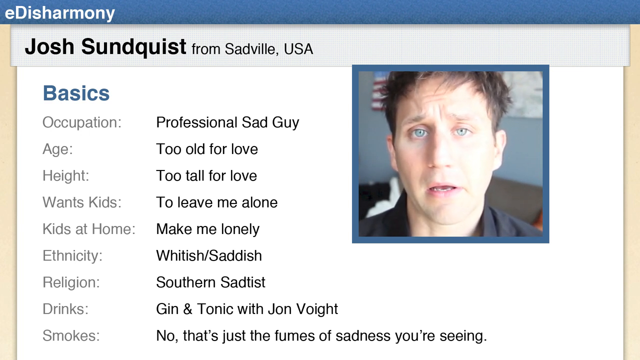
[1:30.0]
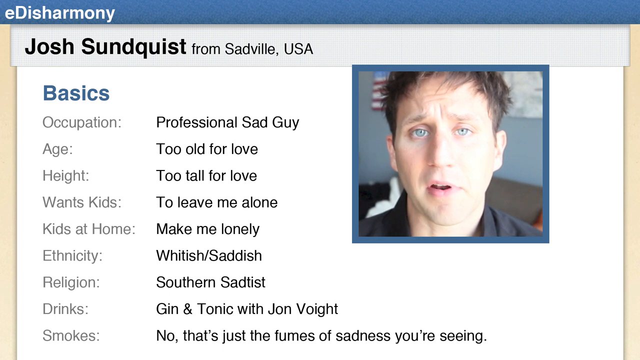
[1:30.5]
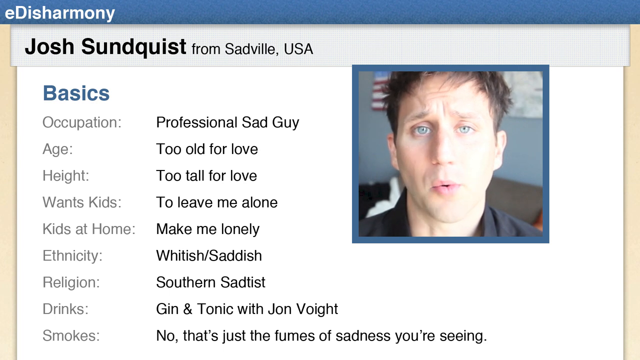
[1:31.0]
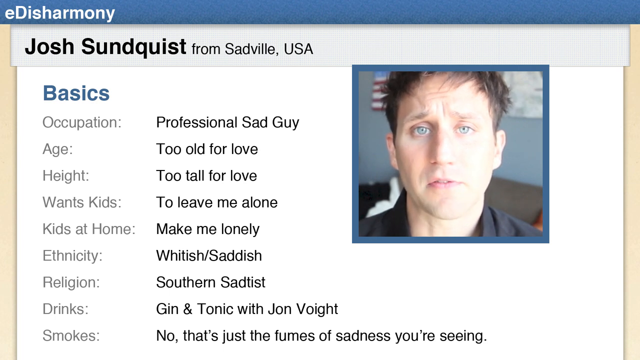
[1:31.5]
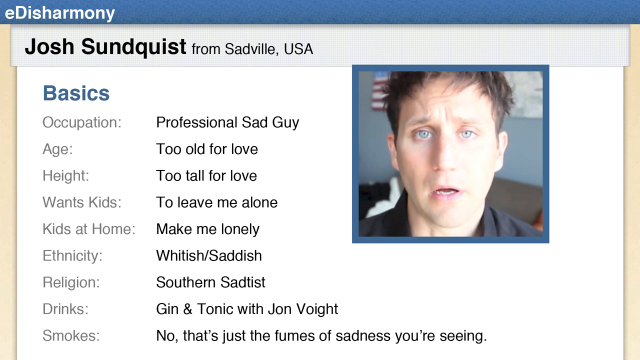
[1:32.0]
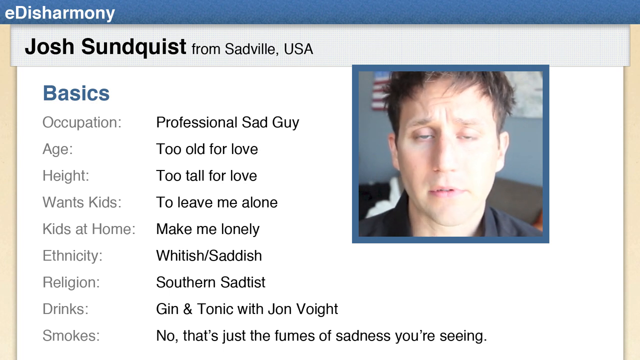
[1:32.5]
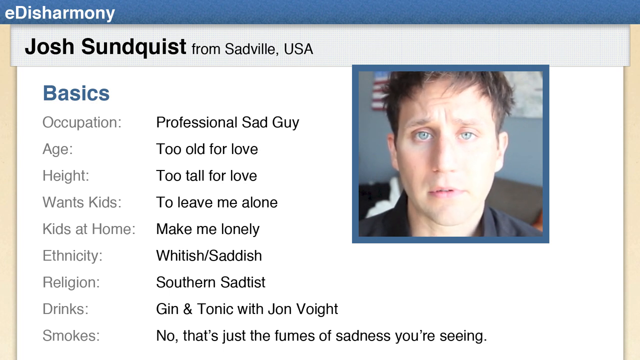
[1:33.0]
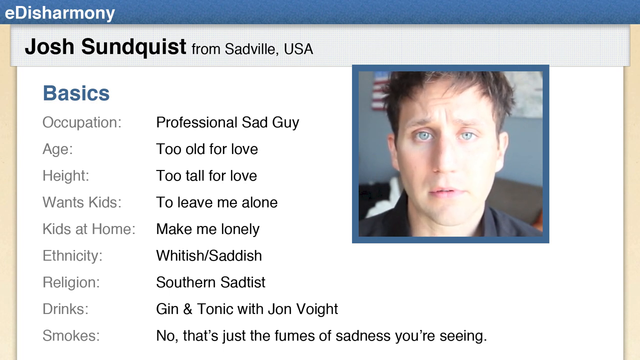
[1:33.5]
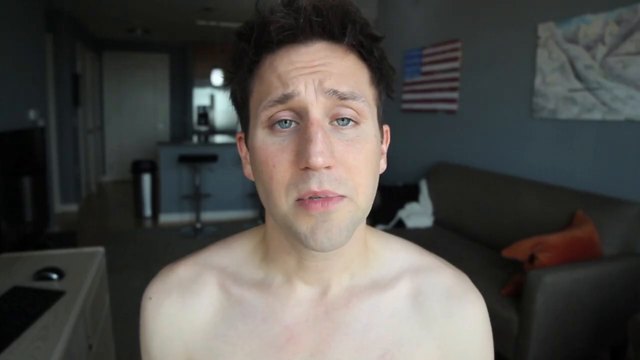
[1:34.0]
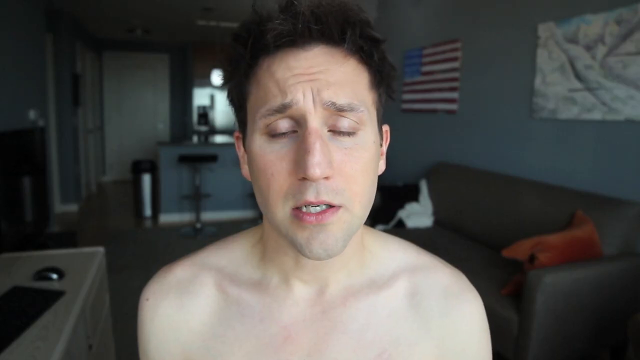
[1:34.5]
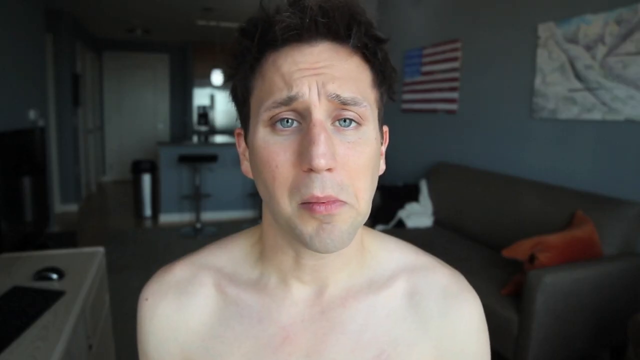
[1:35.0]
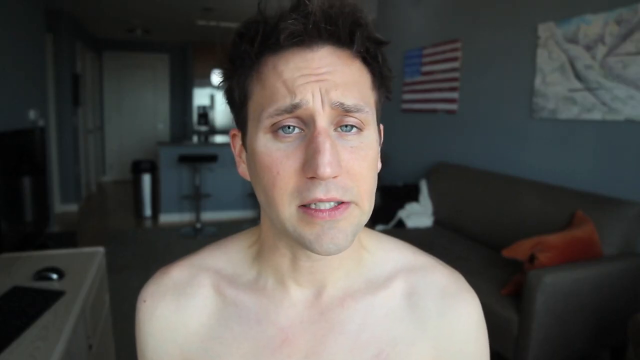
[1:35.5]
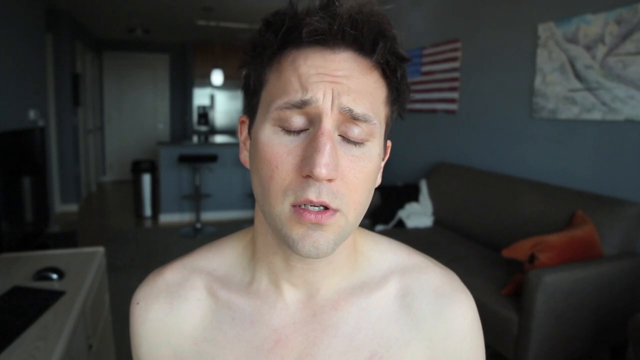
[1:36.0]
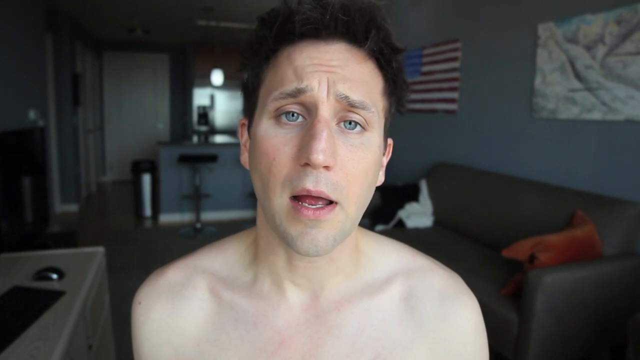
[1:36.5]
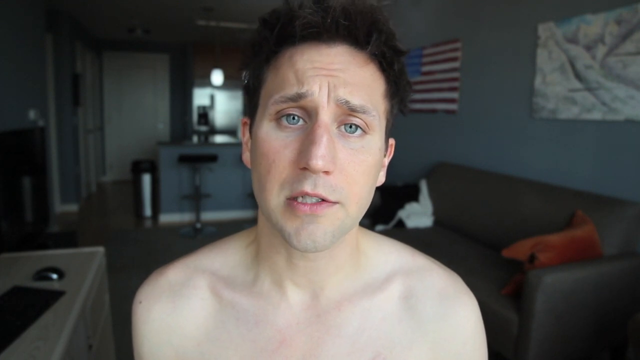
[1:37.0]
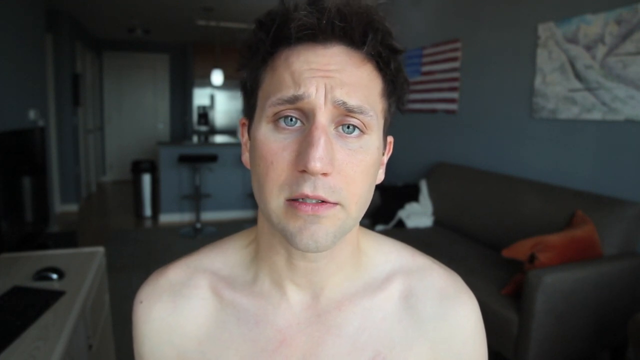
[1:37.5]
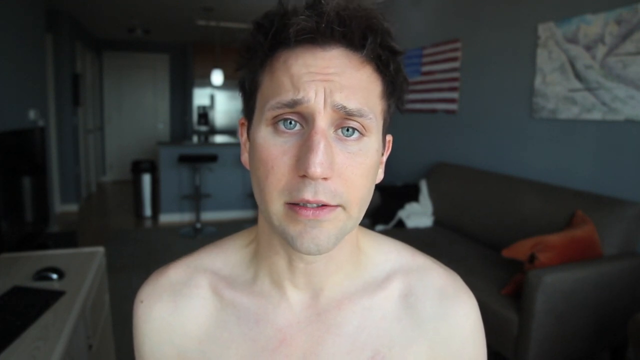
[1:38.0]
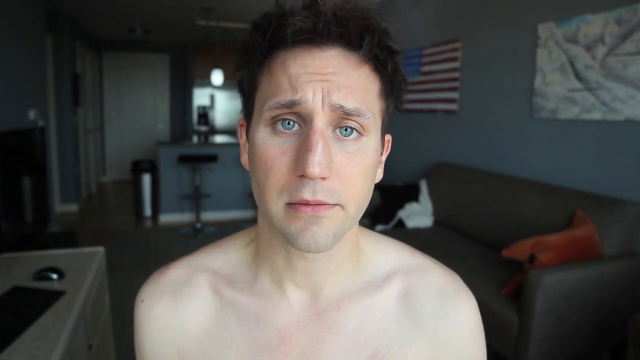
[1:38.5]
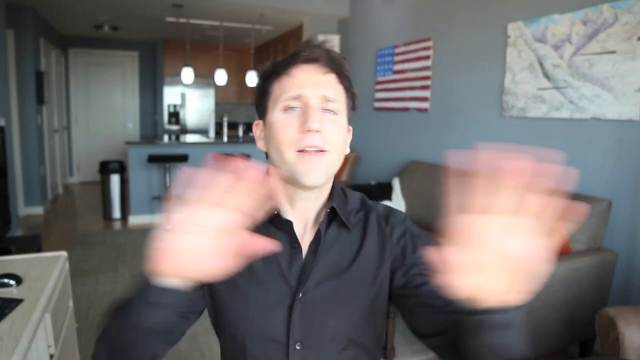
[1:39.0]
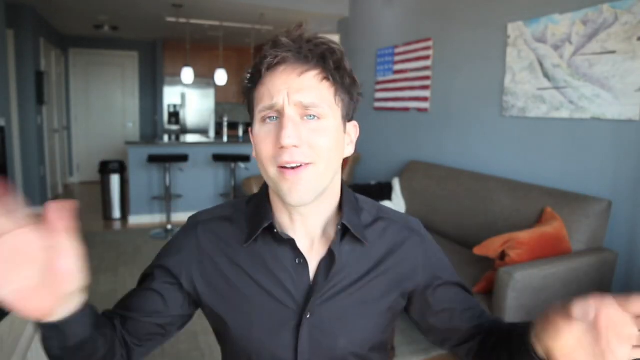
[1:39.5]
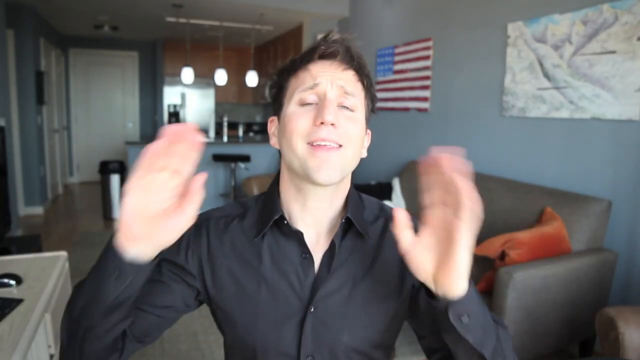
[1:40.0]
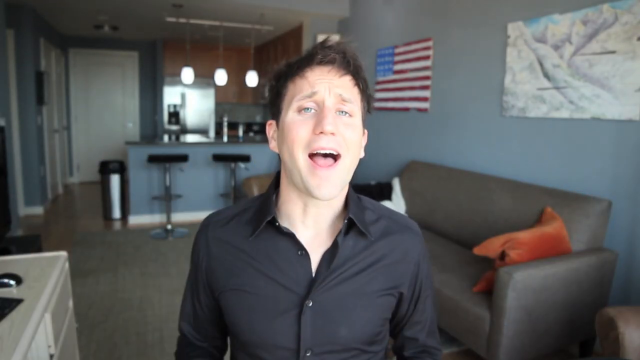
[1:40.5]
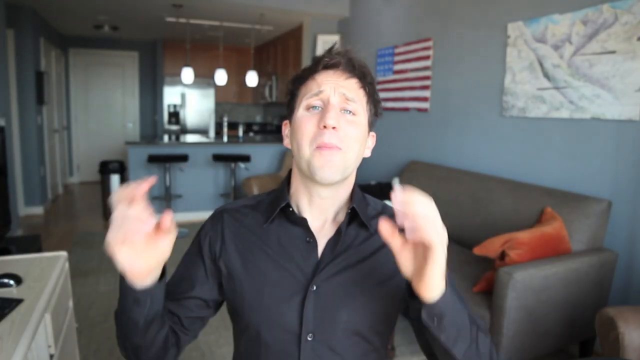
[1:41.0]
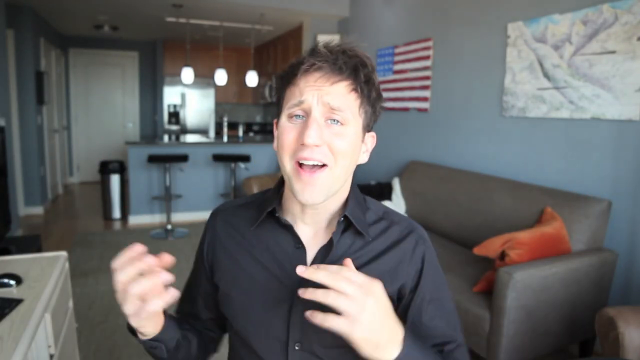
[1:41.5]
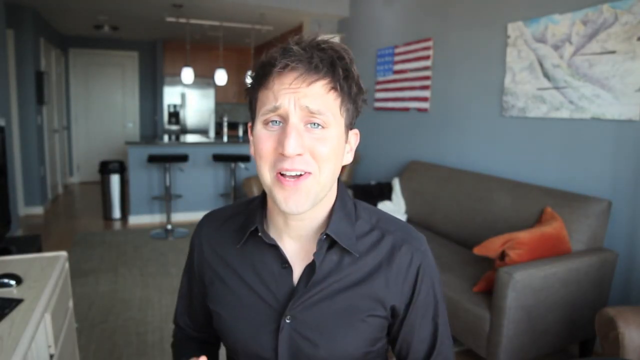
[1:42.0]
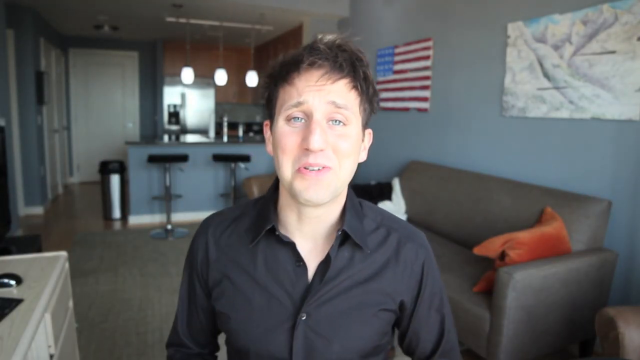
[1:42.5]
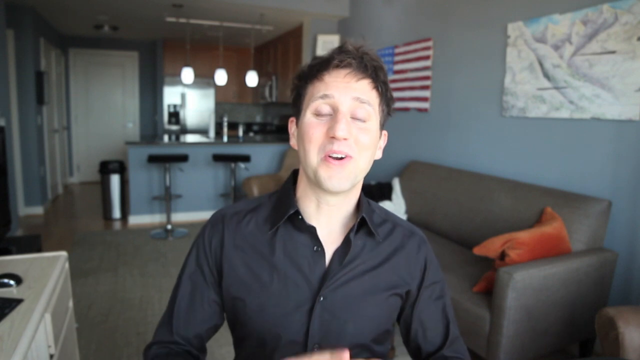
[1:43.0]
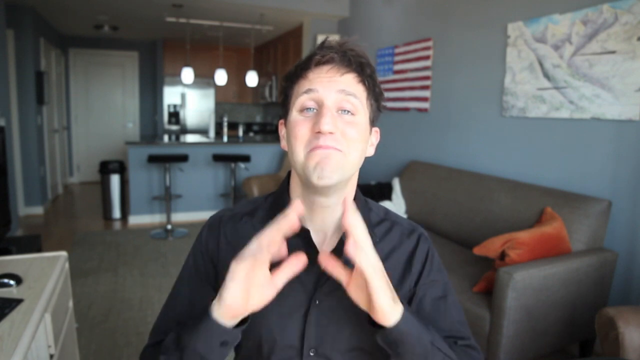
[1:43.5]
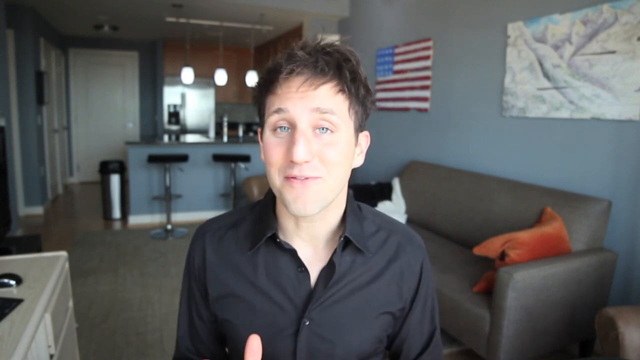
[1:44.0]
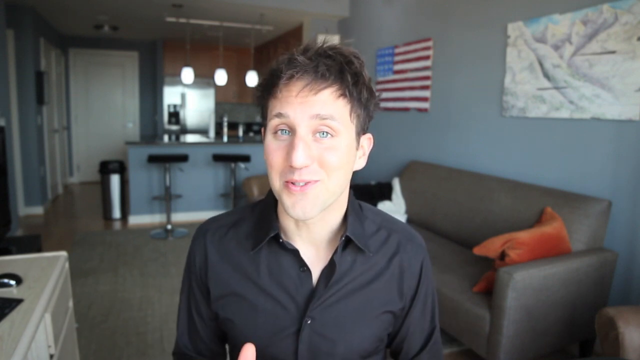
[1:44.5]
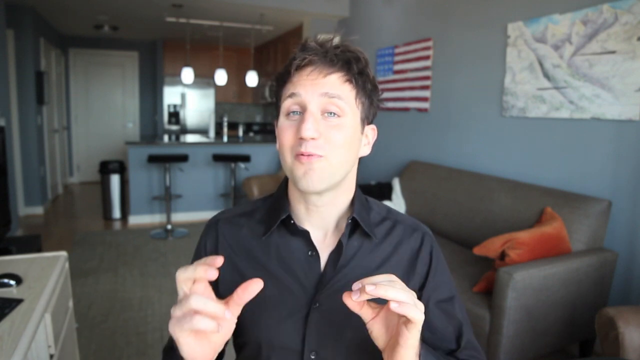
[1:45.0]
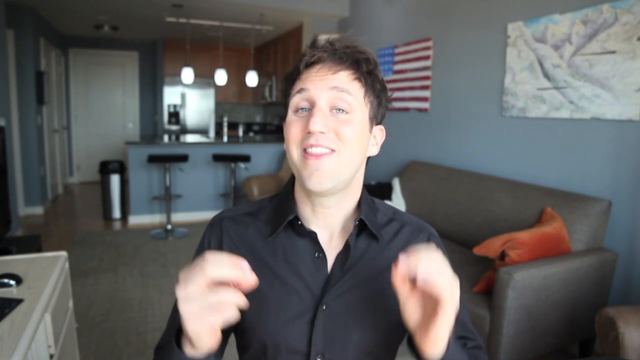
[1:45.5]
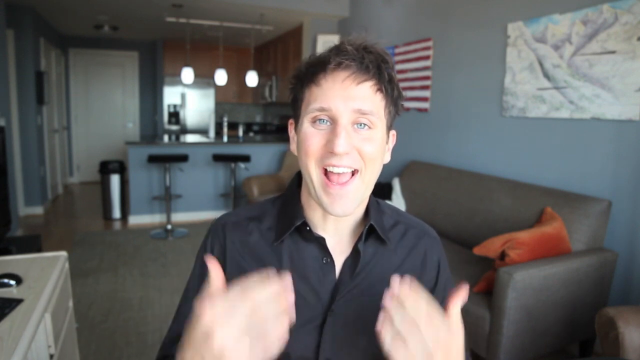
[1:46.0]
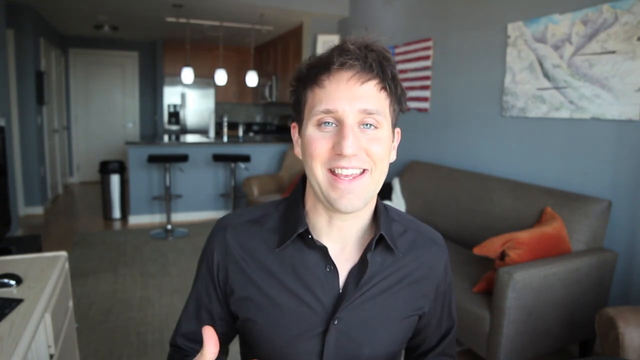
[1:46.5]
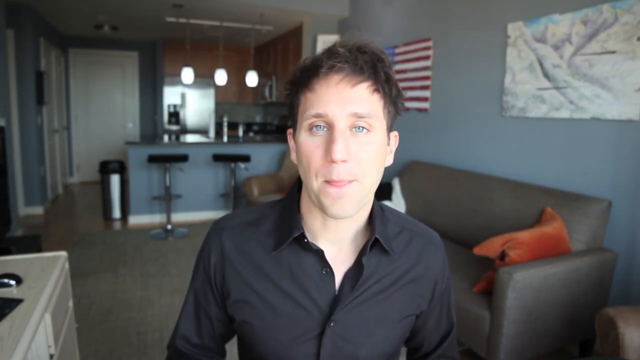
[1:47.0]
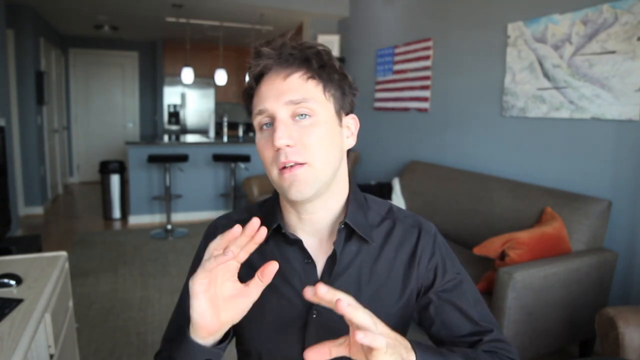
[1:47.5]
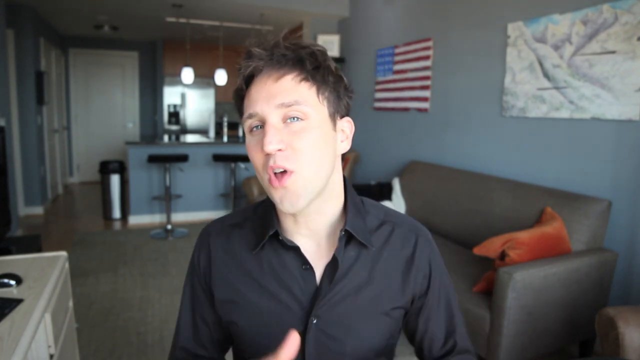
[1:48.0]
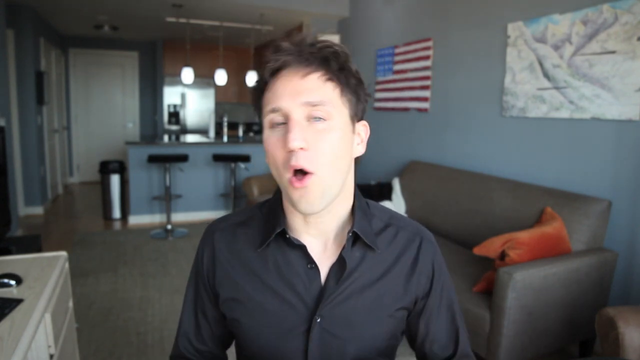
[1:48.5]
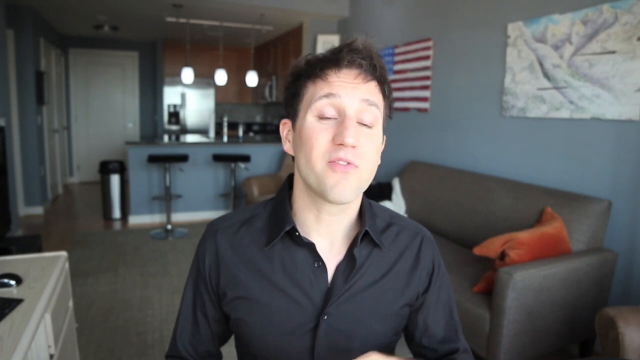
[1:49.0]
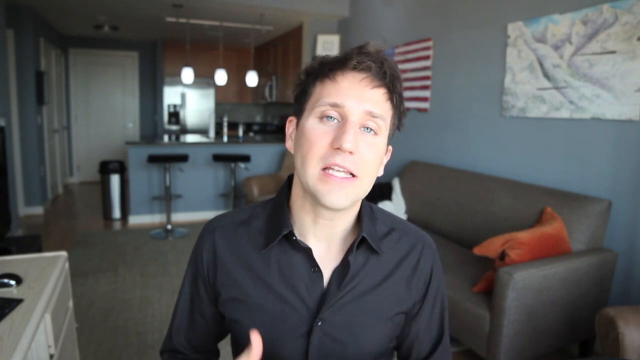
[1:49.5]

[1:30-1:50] A profile from E-Disharmony shows the name John Sundquist, from Sadville, USA, with basic information listed below and a picture of him to the right. In the picture he looks kind of sad; he is clean-shaven with blue eyes and brown hair. The entries read: occupation "Professional Sad Guy", age "too old for love", height "too tall for love", wants kids "leave me alone", kids at home "makes me lonely", ethnicity "white-ish, sad-ish", religion "Southern sad-tist", and drinks "gin and tonic with John Boyt". After the profile, he is back on camera talking, now without a shirt, his bare shoulders visible. The room behind him is darker, so it seems to be later in the day. He then appears again in his black button-up shirt.